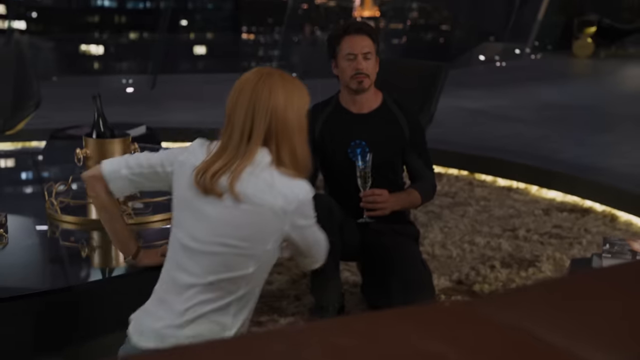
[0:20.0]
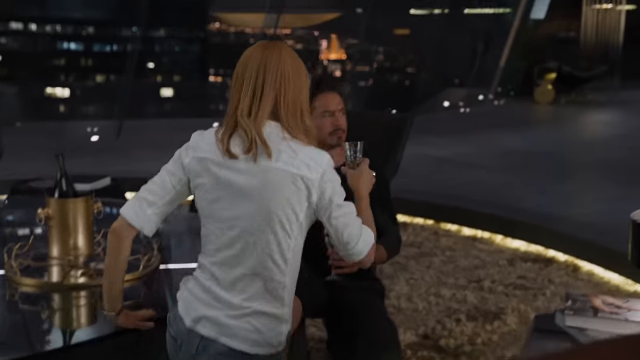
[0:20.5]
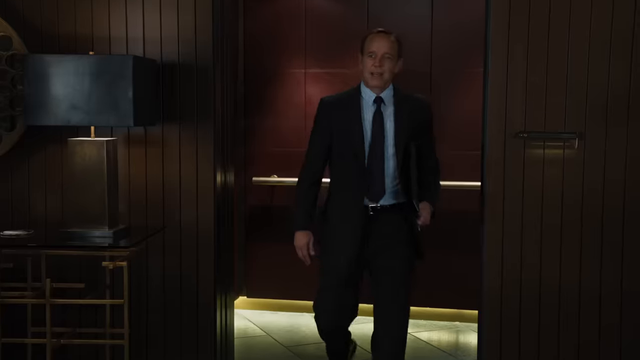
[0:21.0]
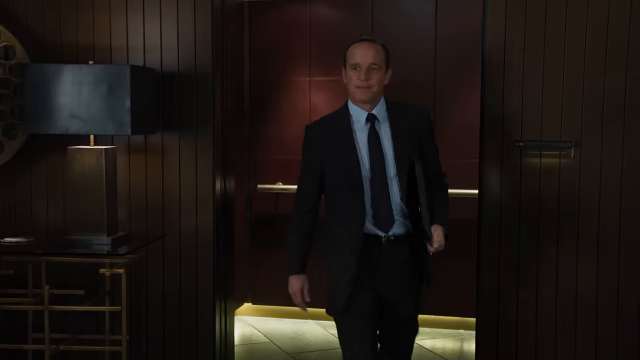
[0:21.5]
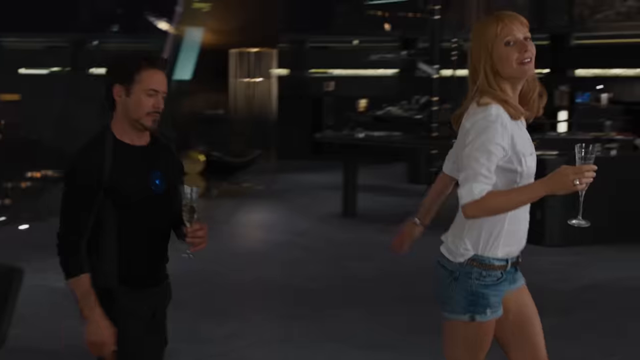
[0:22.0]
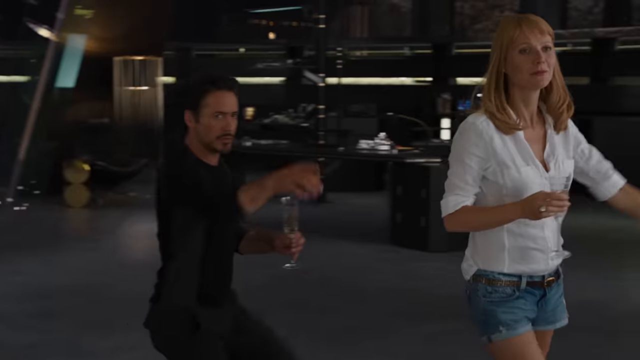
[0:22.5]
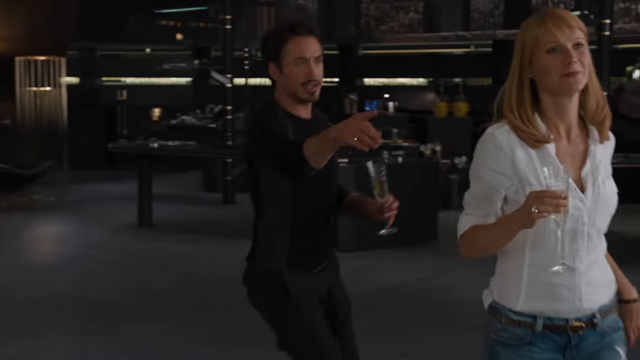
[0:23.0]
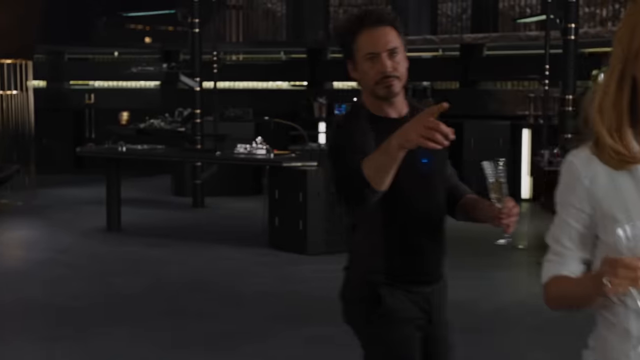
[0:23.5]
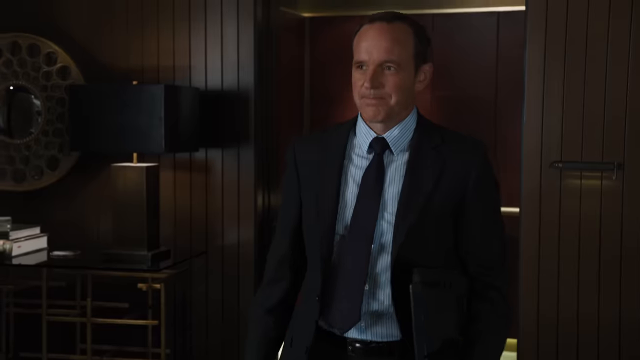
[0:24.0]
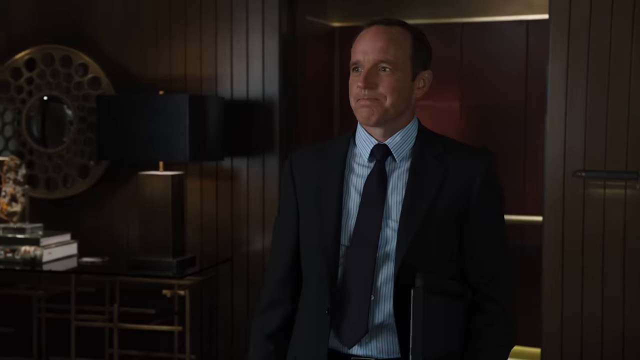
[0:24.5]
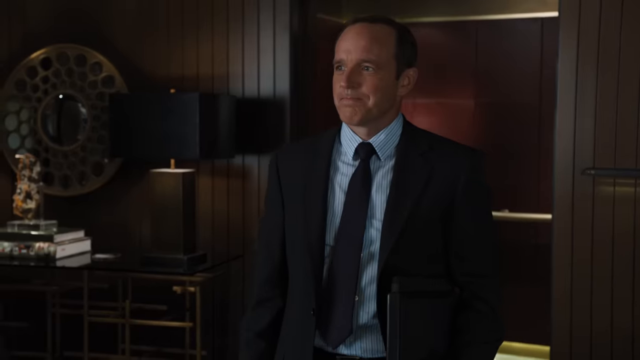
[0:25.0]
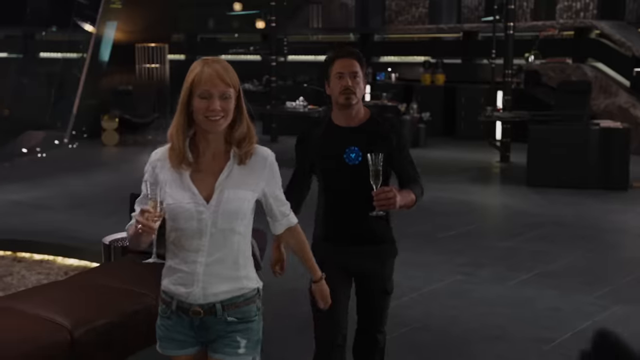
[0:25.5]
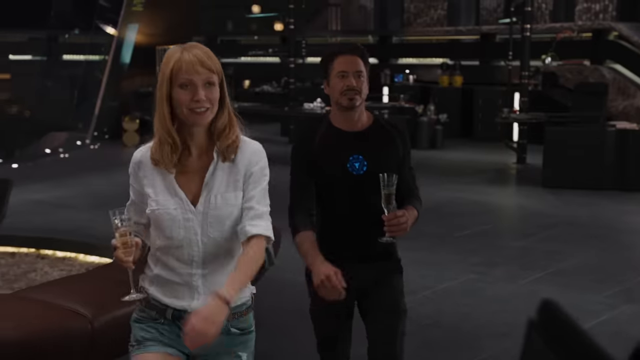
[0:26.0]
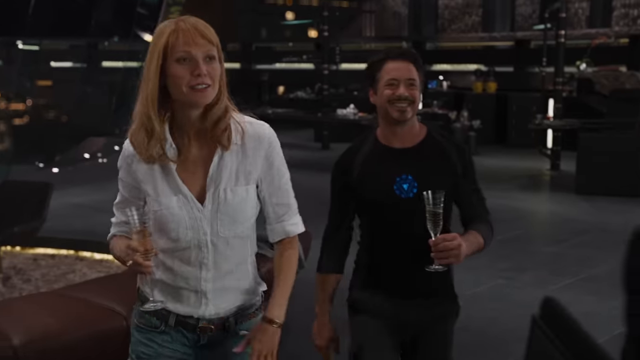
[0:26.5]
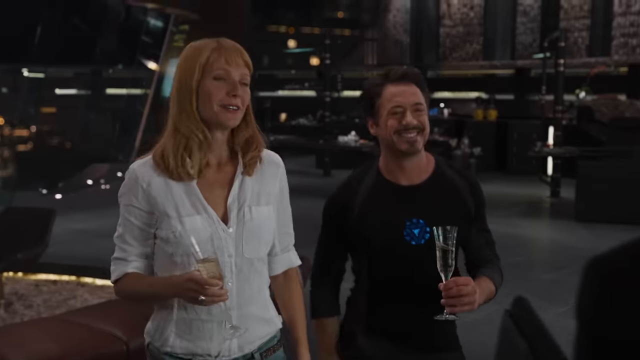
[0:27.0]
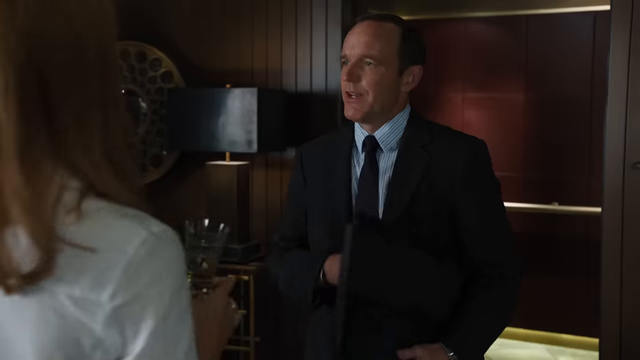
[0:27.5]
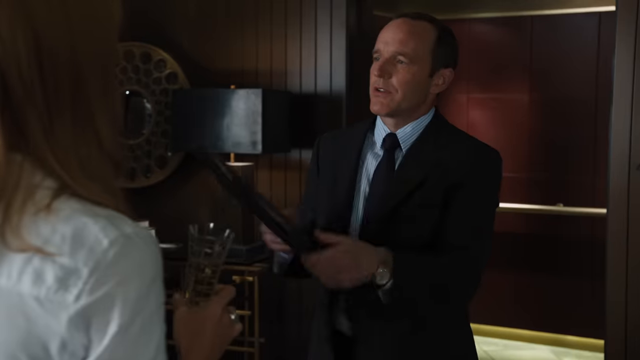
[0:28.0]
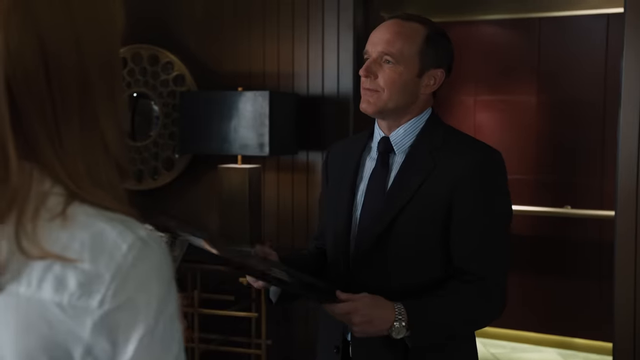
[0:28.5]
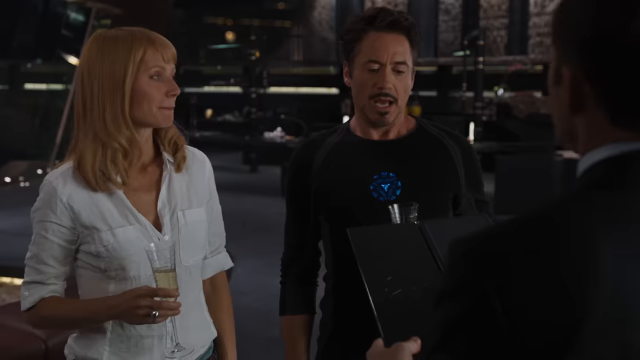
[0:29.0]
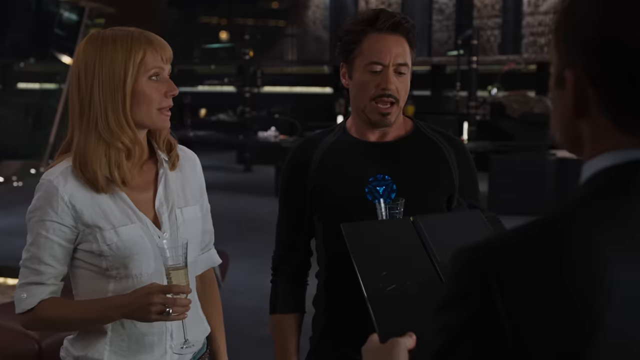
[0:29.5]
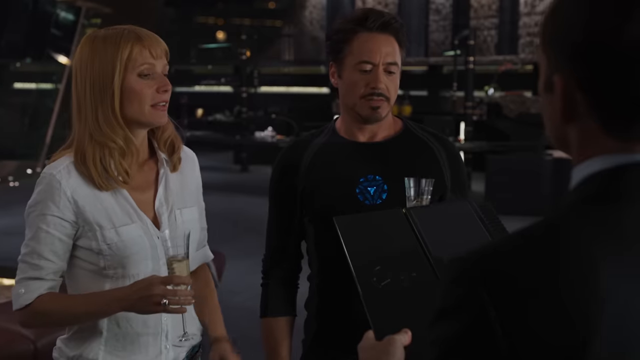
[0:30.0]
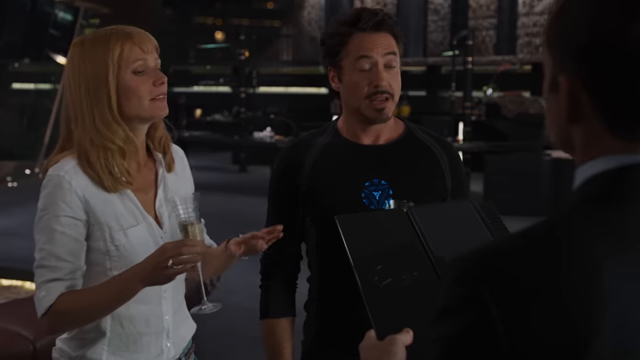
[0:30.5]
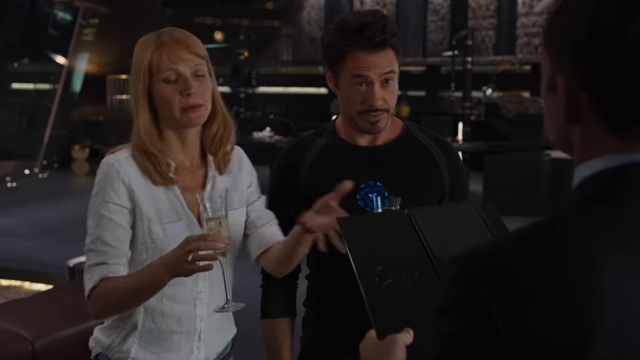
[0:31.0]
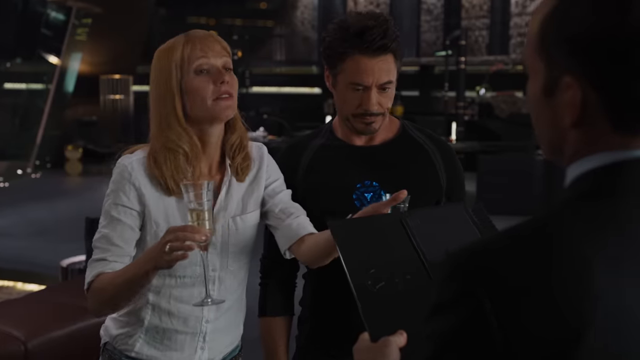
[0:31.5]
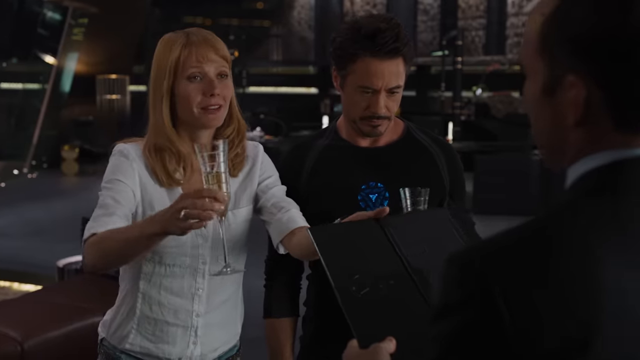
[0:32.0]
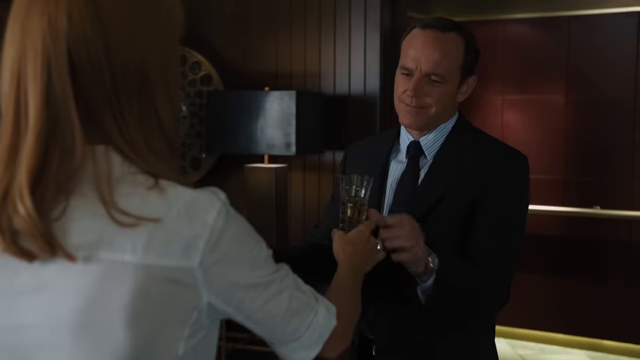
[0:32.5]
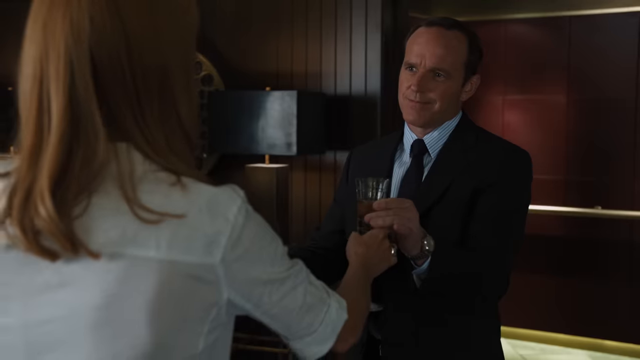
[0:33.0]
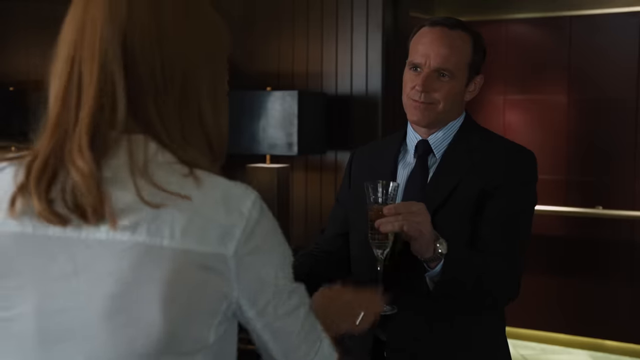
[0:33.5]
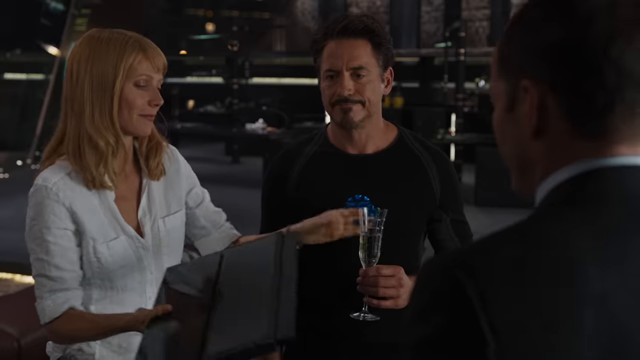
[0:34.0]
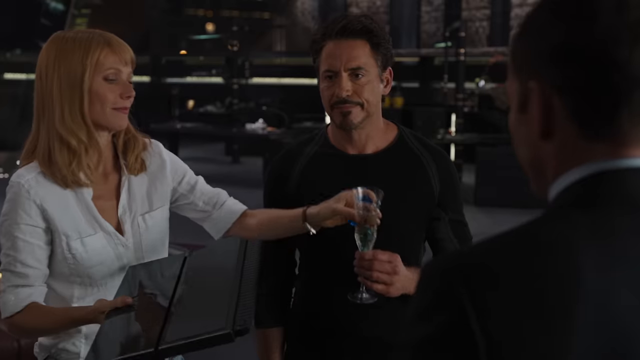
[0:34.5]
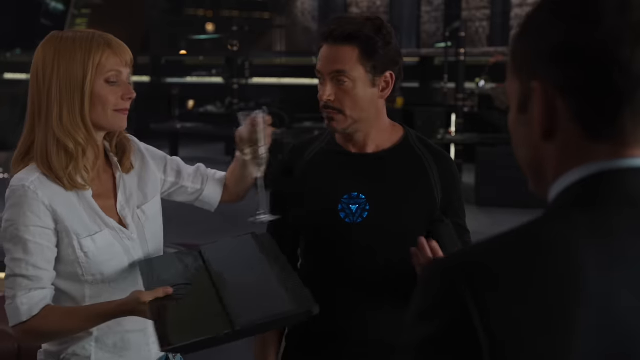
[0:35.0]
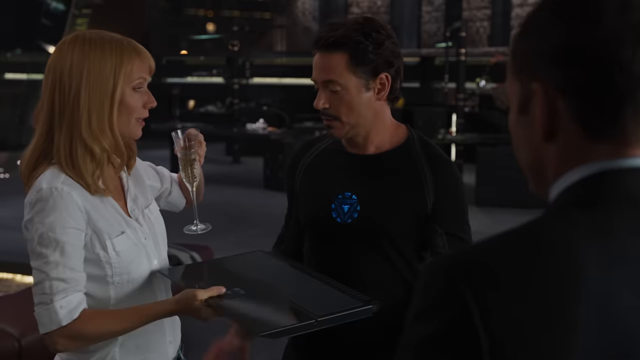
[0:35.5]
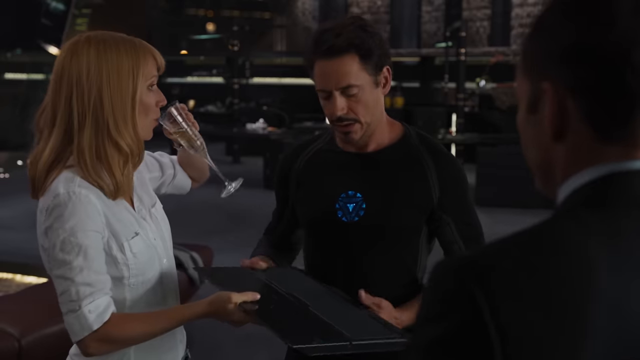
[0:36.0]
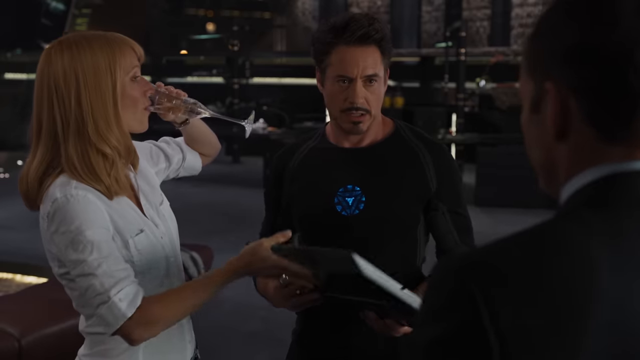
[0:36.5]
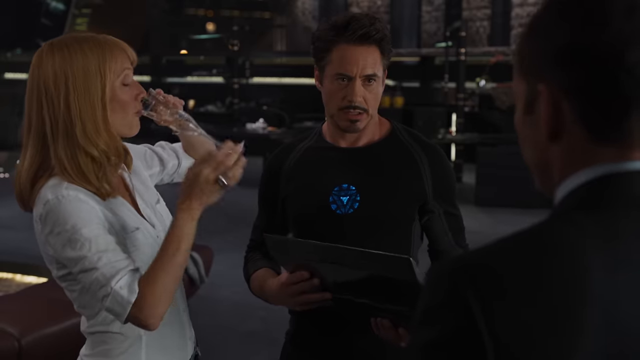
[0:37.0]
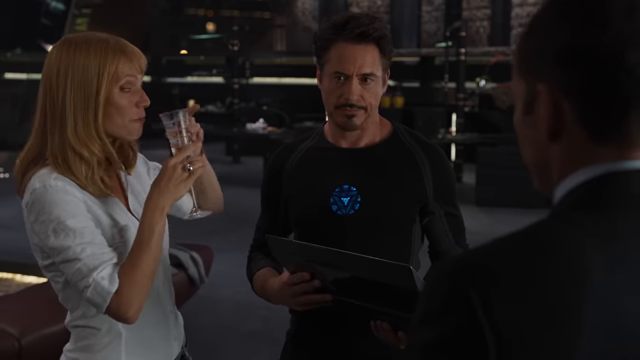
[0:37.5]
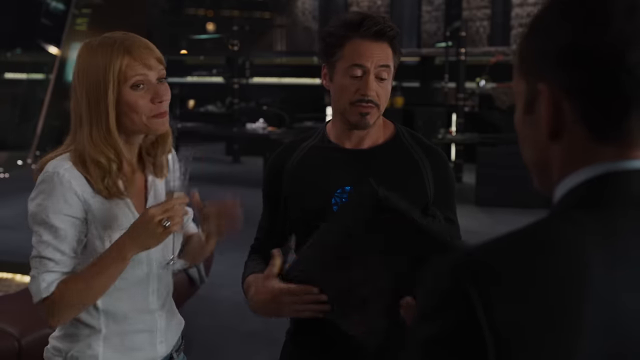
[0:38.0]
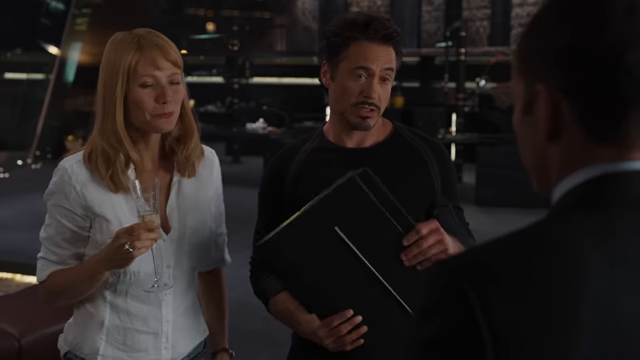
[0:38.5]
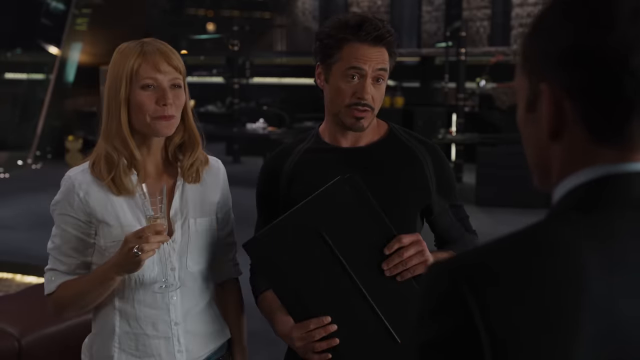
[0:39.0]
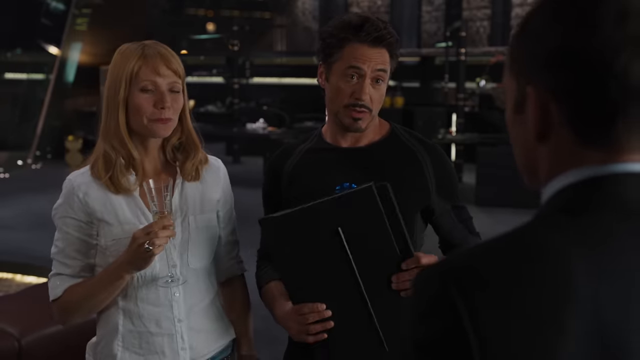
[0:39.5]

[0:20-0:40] Robert Downey Jr. appears in the movie wearing a black shirt and black pants; he has black hair, a black mustache and goatee, and dark eyes. He holds a glass full of champagne or white wine. The lady to his right, on the viewer's left, has her back to the camera; she wears a white top, has reddish hair, and holds the same glass and liquid. Someone has just walked in through an elevator door: a man in his young 50s with a receding hairline, dark hair and dark eyes, wearing a black suit, an off-white, bluish-striped shirt and a black tie. He walks in to the smiles of both Robert Downey Jr. and his female friend.